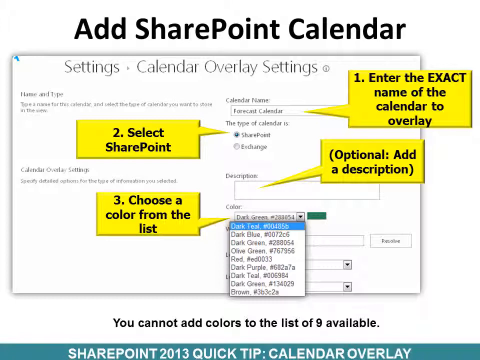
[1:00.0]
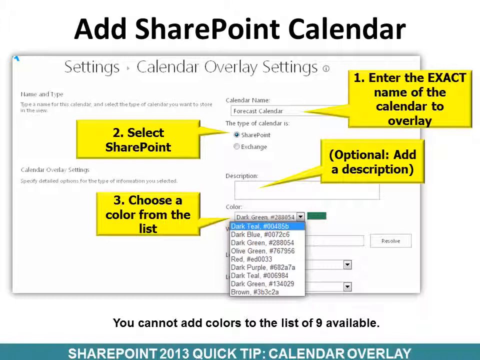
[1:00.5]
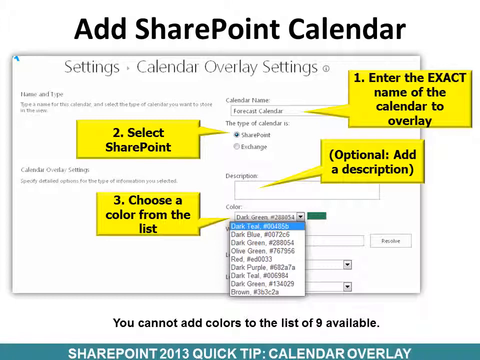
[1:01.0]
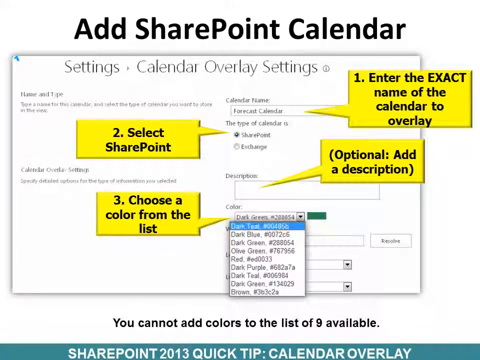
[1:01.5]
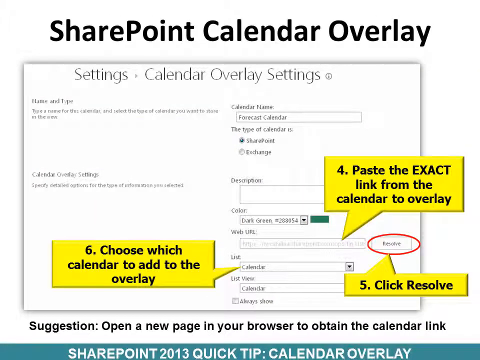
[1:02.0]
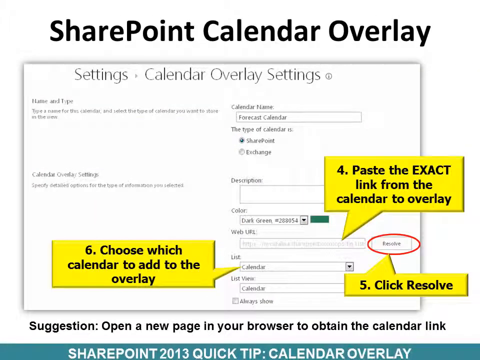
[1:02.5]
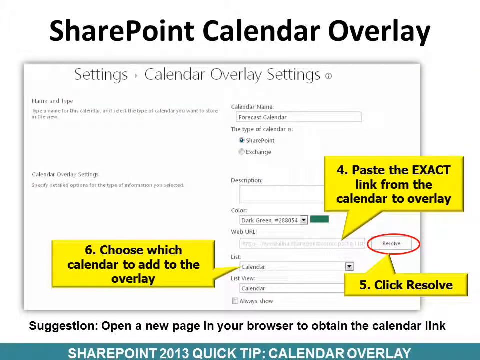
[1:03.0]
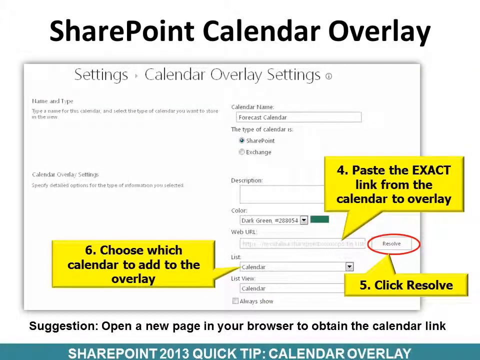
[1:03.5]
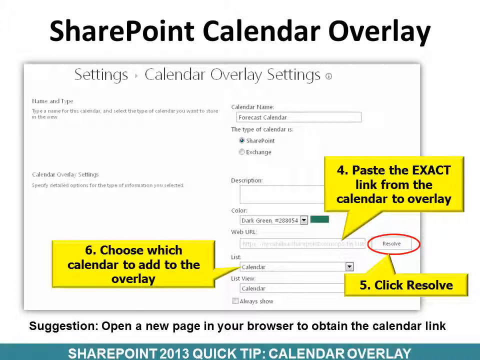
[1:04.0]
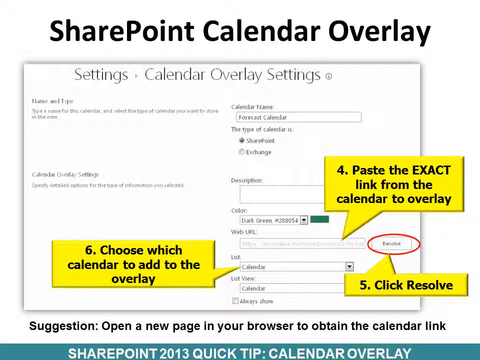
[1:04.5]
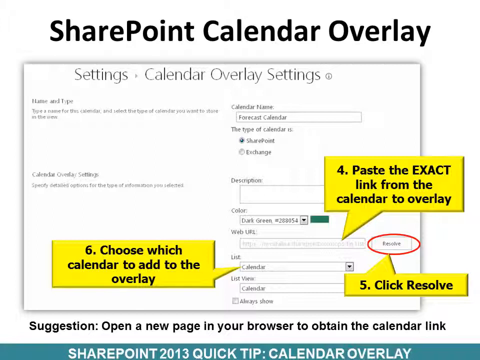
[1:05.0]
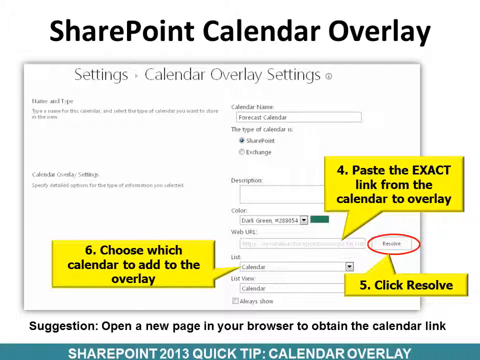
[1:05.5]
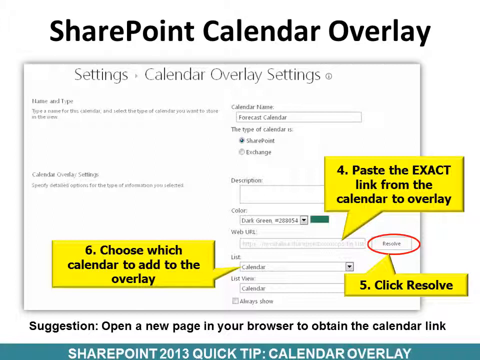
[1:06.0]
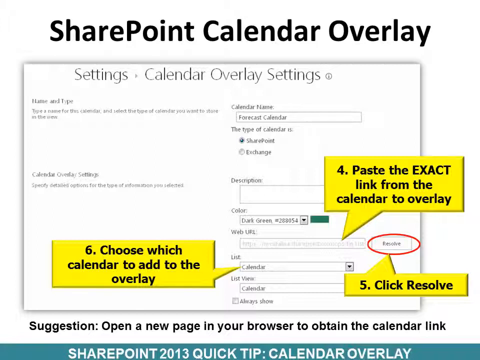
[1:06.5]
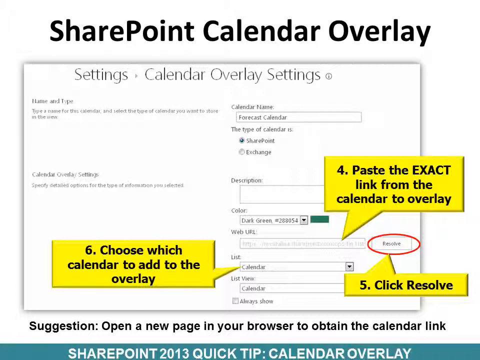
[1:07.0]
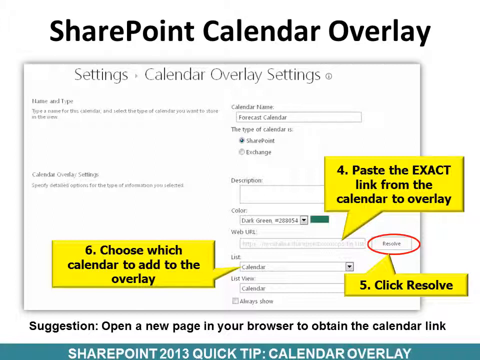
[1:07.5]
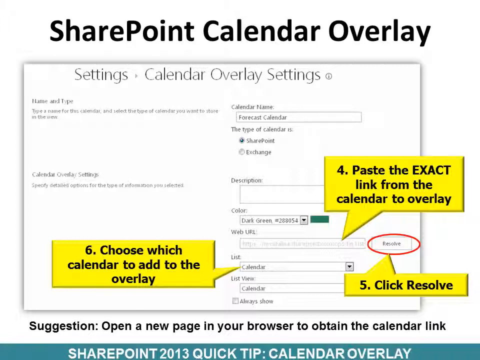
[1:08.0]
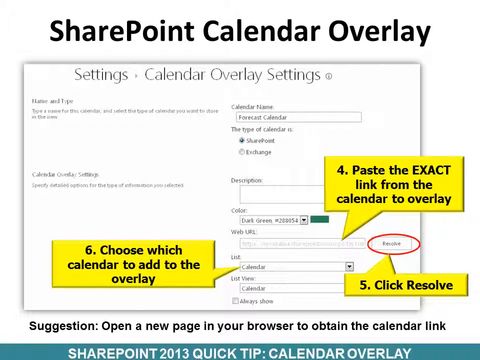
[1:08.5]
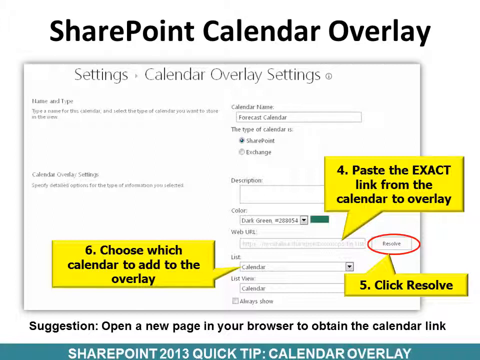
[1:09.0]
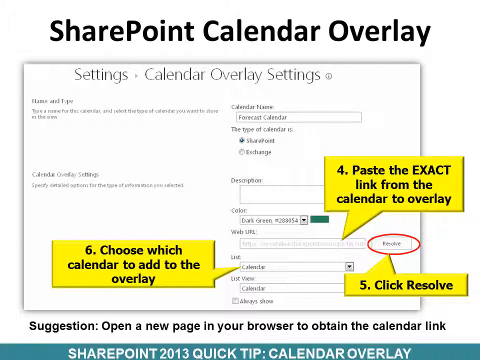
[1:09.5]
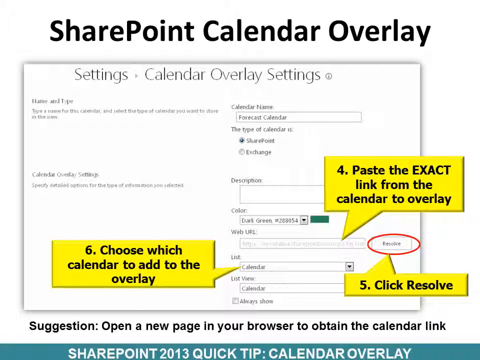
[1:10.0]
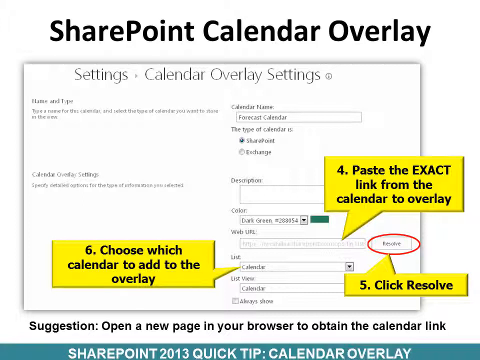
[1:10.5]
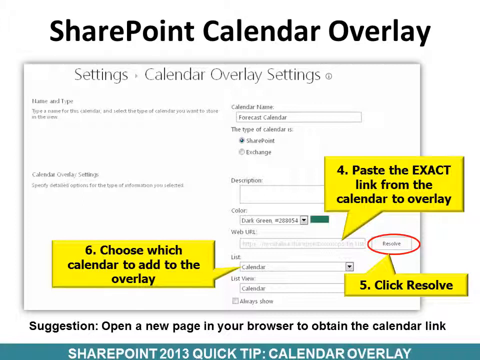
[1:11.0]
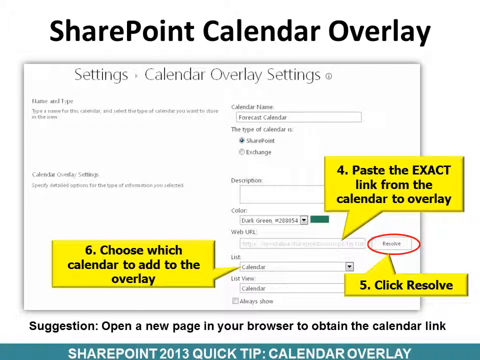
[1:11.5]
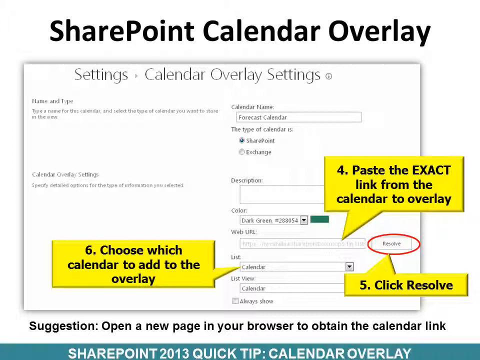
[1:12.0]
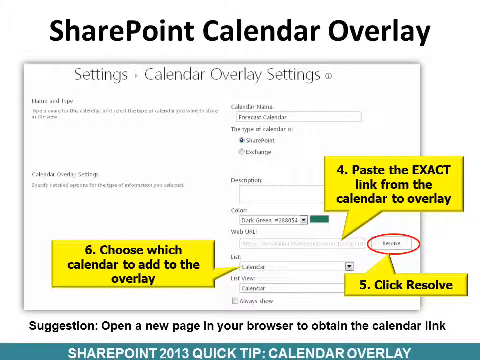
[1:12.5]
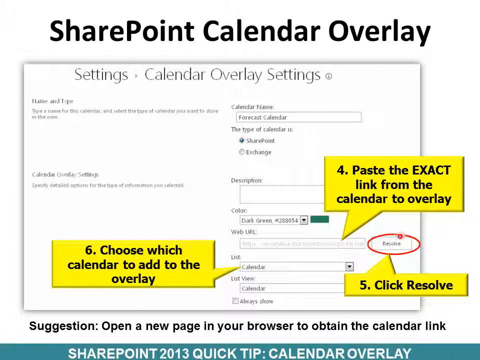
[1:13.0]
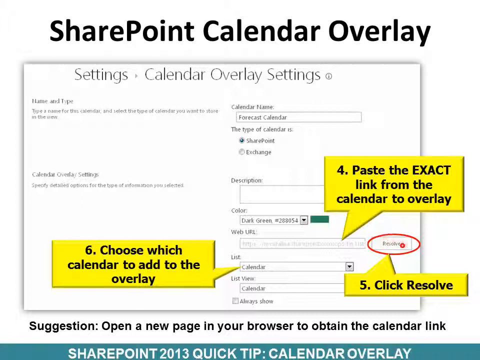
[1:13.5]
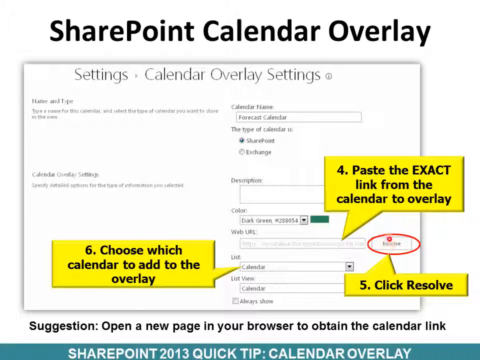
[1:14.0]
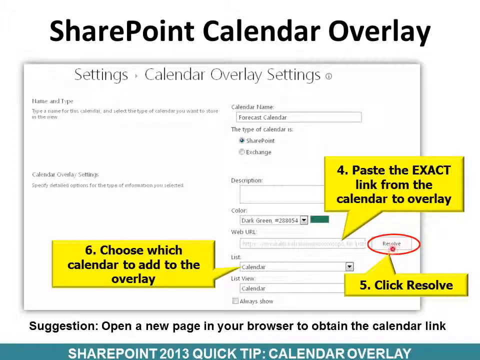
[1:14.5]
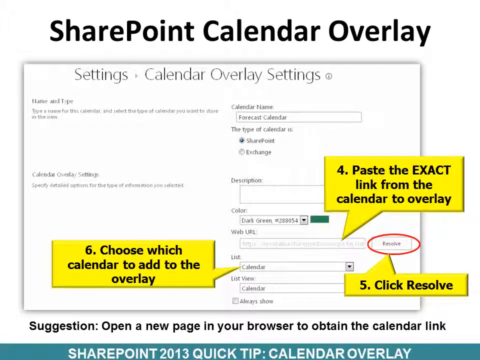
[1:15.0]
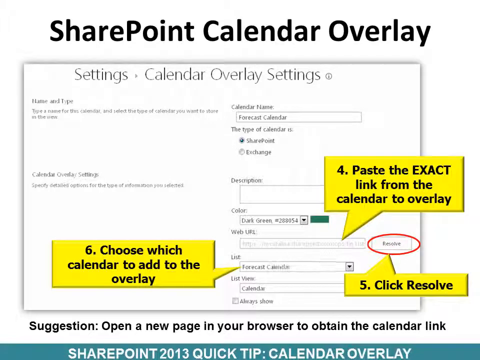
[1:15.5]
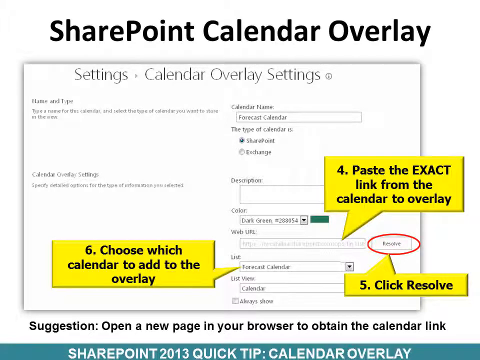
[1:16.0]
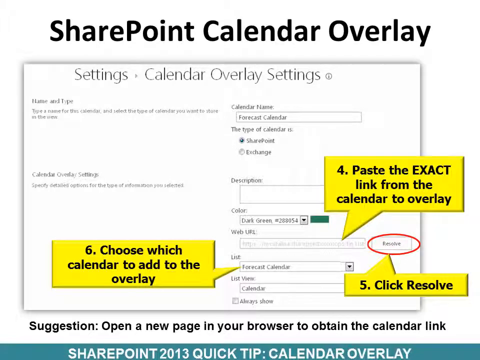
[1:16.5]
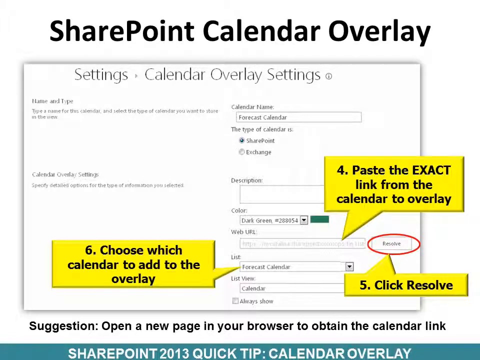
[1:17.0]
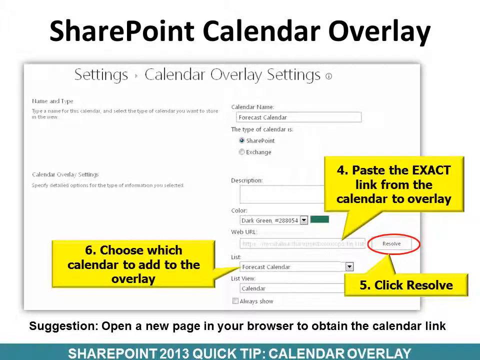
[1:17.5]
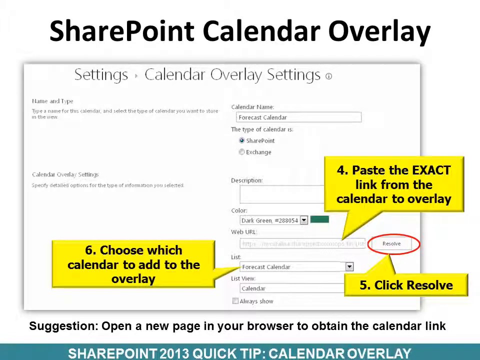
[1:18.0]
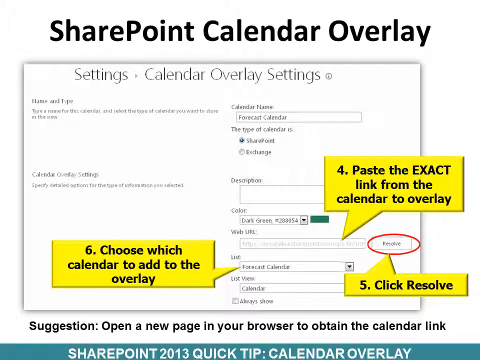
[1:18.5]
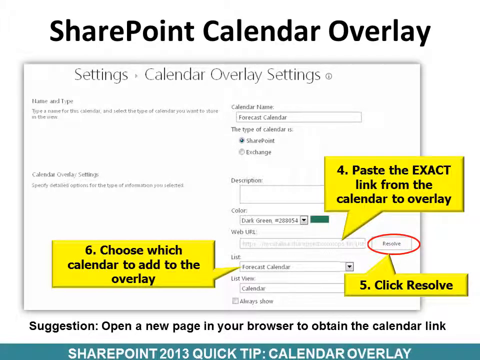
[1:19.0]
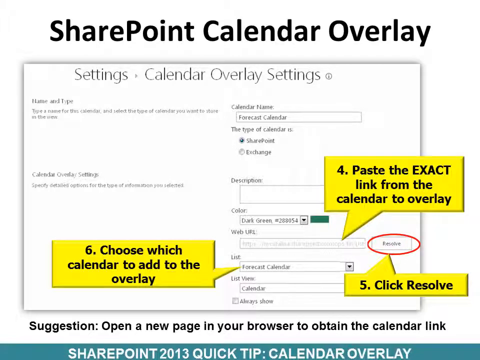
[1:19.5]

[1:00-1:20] On-screen instructions continue for the calendar overlay settings: entering the exact name of the calendar to overlay, selecting a SharePoint, adding a description, and choosing a color from the list. The next instruction is to paste the exact link from the calendar to overlay. Step five is clicking the button named Resolve, and step six is choosing which calendar to add the overlay to.